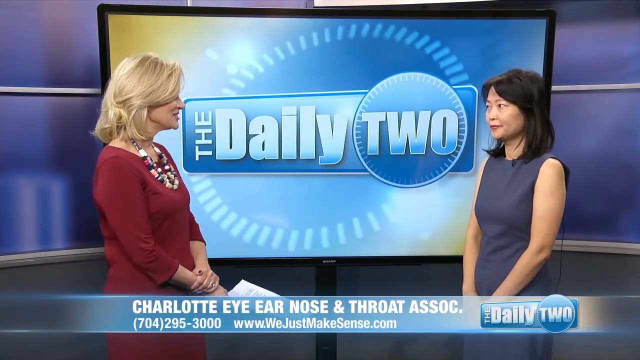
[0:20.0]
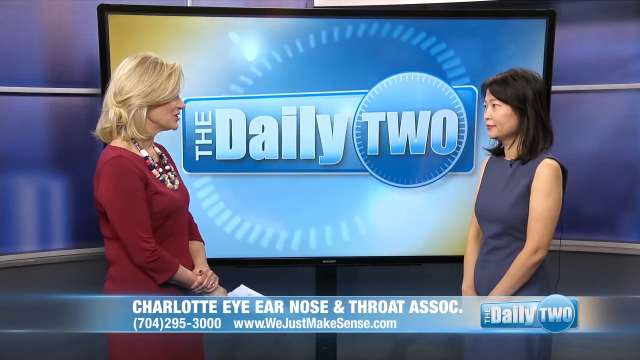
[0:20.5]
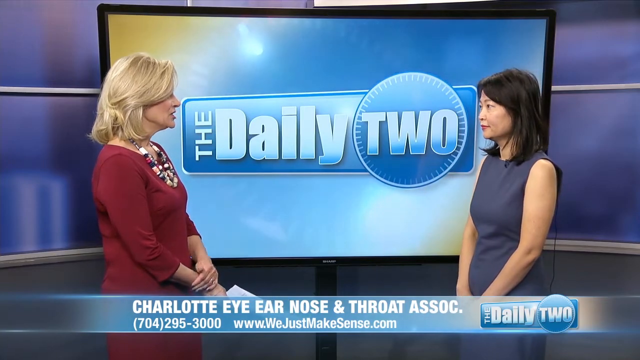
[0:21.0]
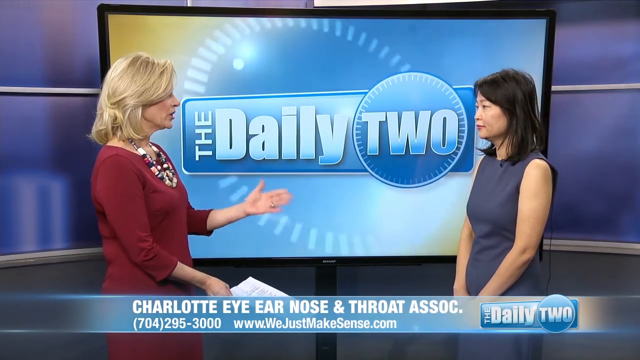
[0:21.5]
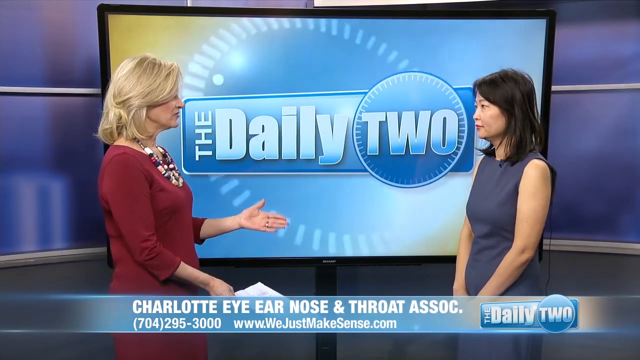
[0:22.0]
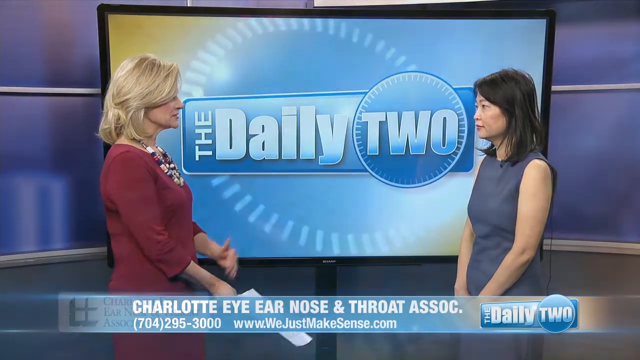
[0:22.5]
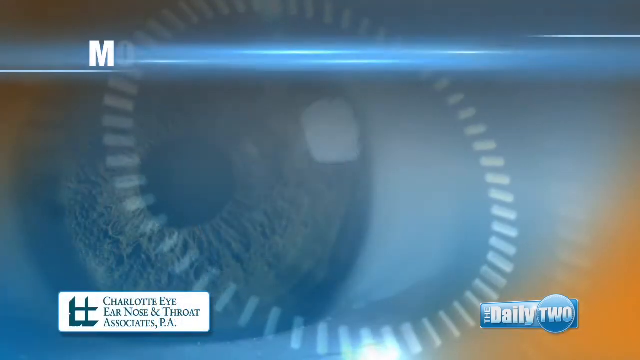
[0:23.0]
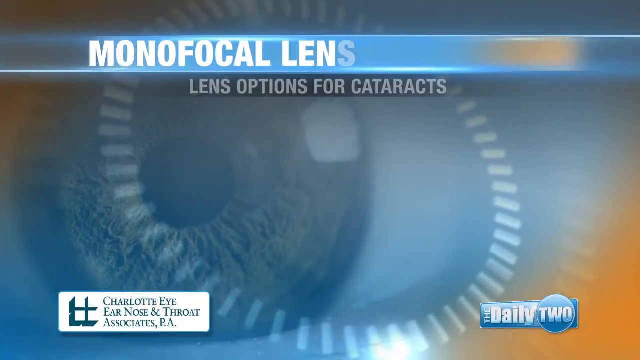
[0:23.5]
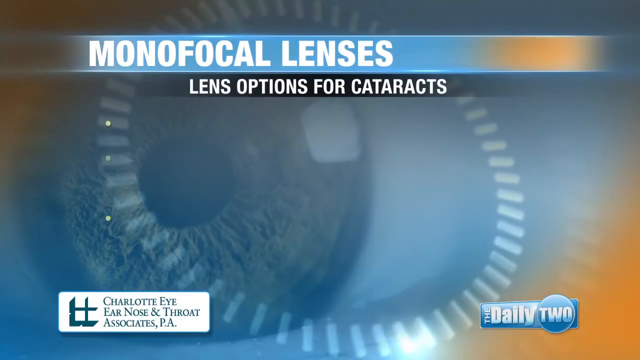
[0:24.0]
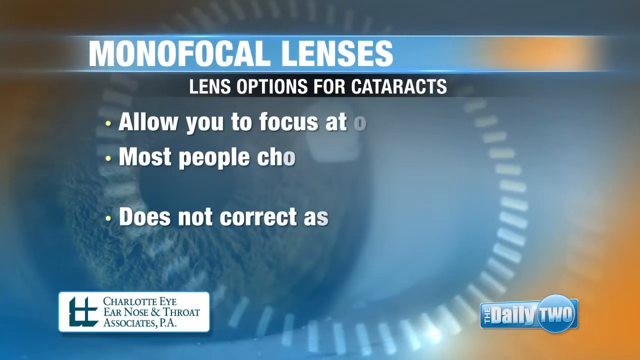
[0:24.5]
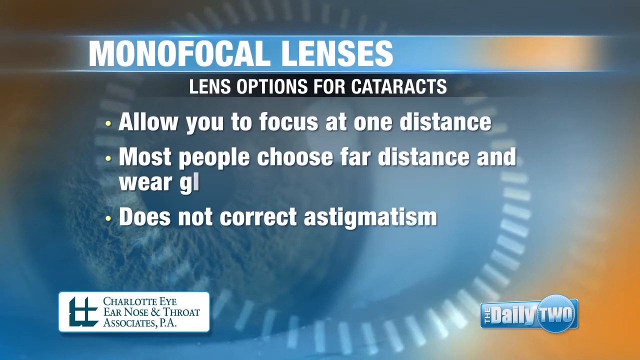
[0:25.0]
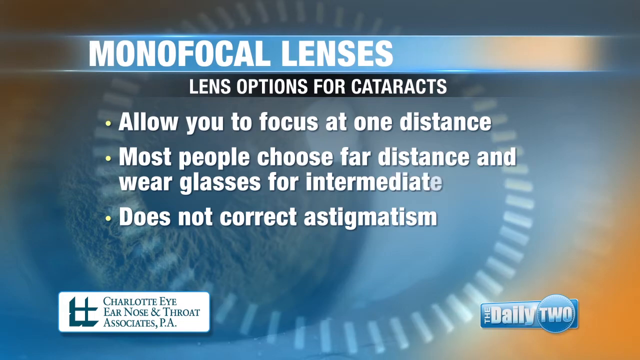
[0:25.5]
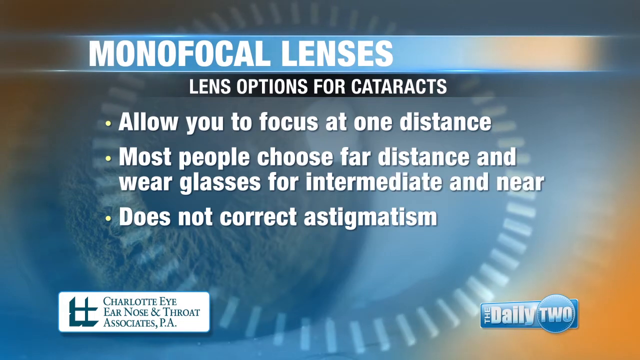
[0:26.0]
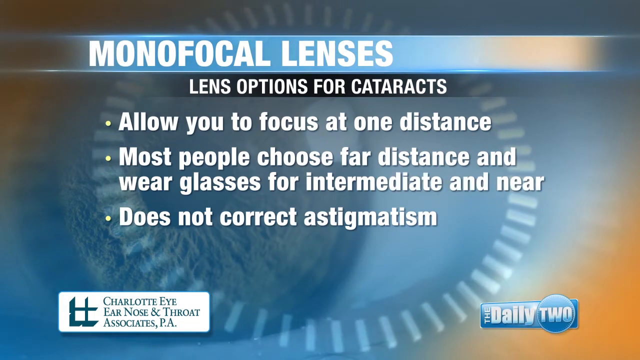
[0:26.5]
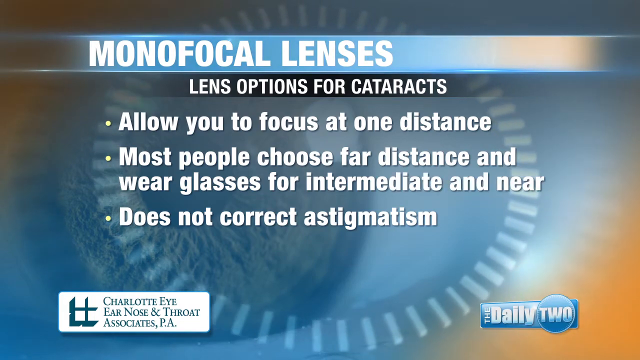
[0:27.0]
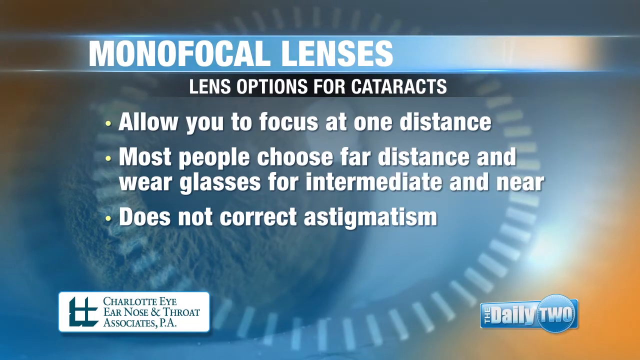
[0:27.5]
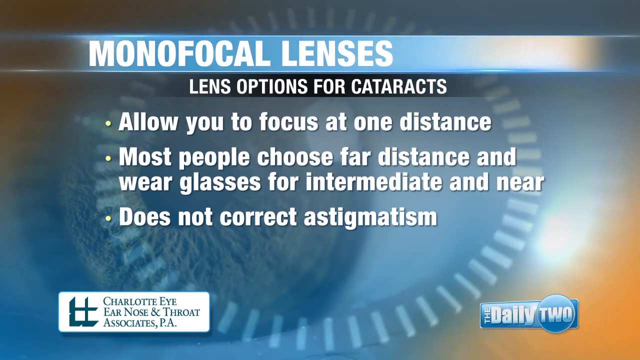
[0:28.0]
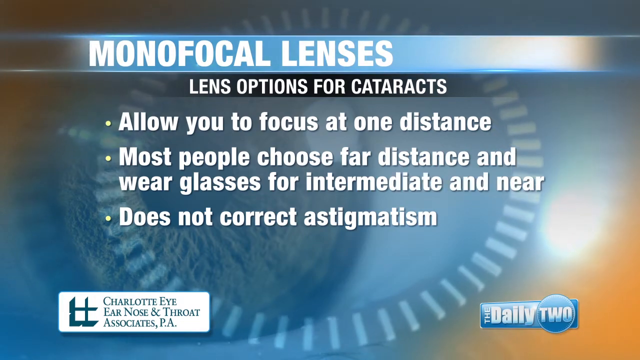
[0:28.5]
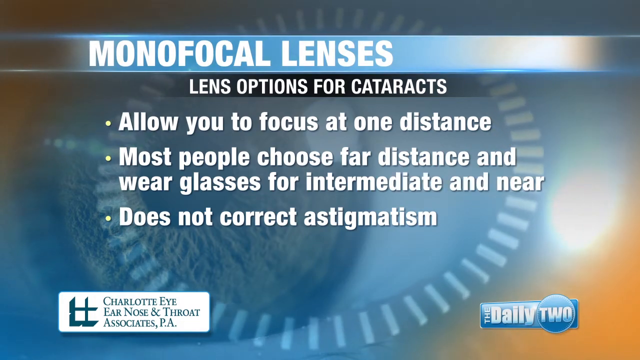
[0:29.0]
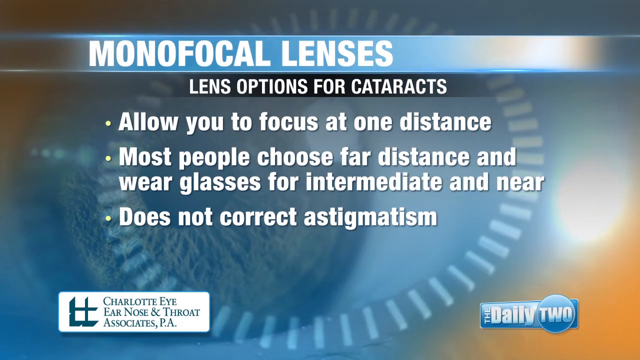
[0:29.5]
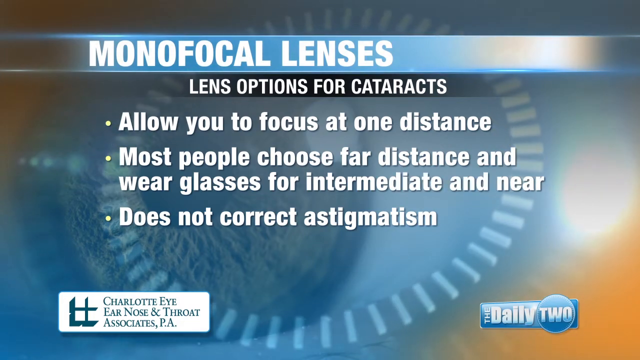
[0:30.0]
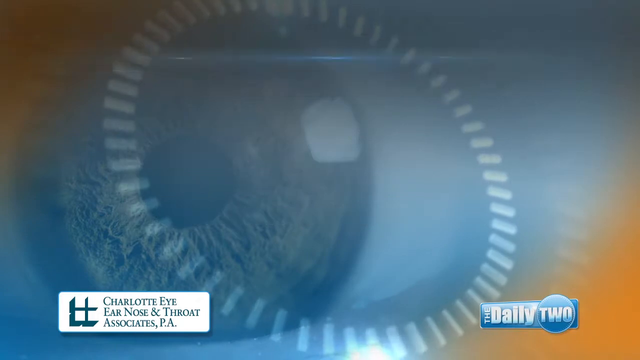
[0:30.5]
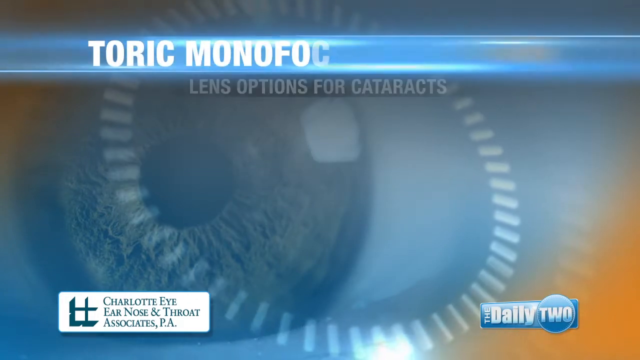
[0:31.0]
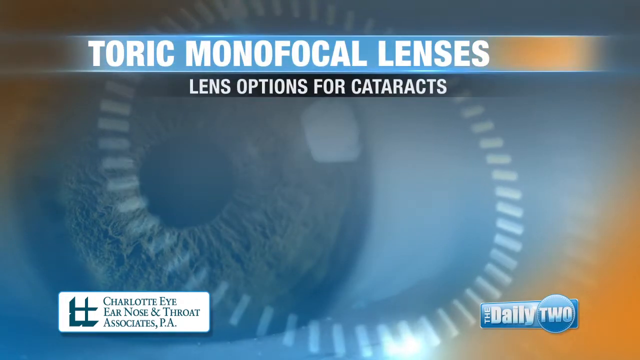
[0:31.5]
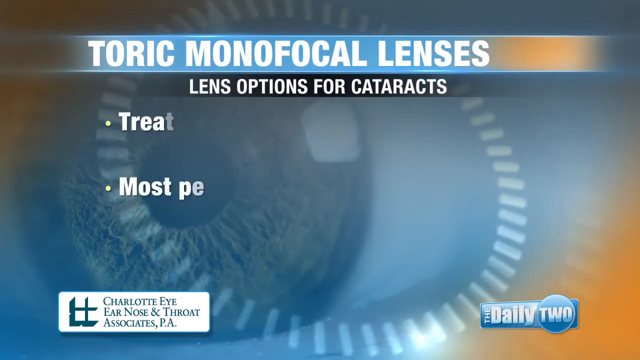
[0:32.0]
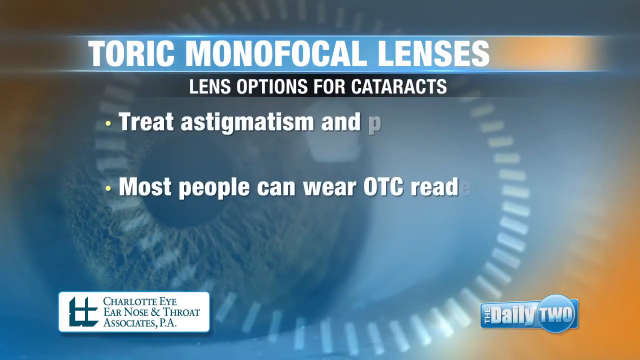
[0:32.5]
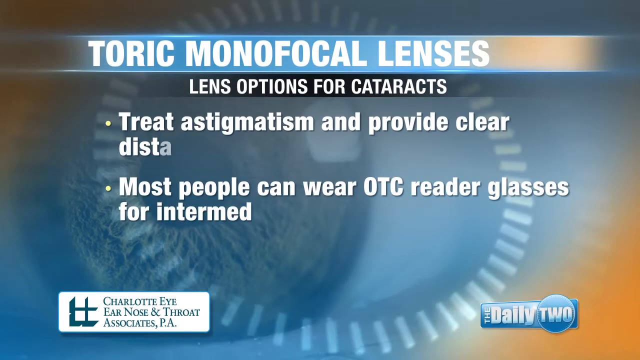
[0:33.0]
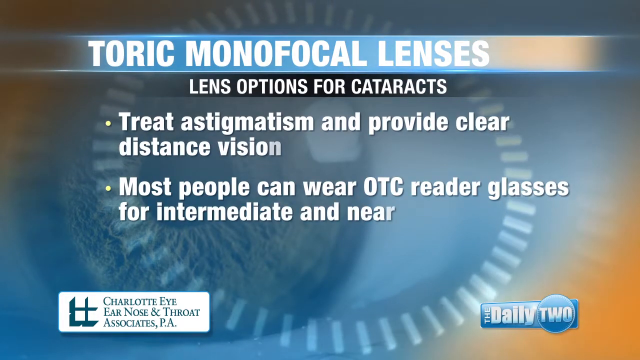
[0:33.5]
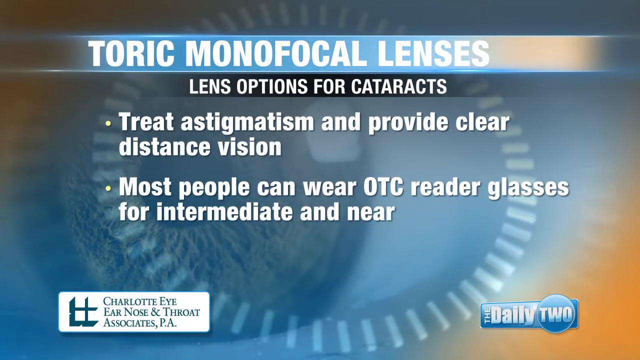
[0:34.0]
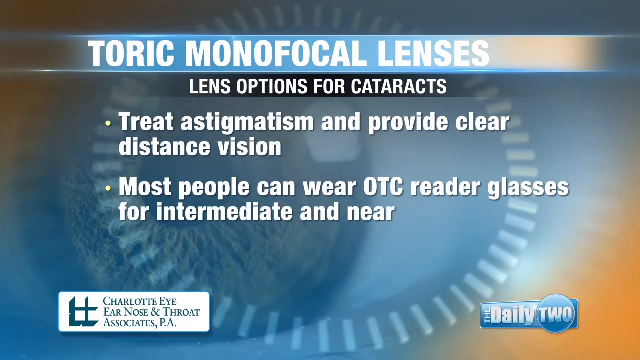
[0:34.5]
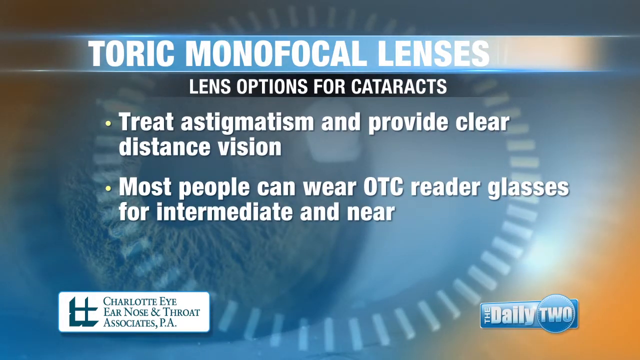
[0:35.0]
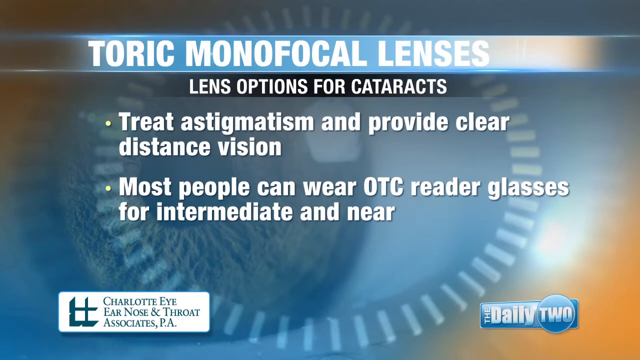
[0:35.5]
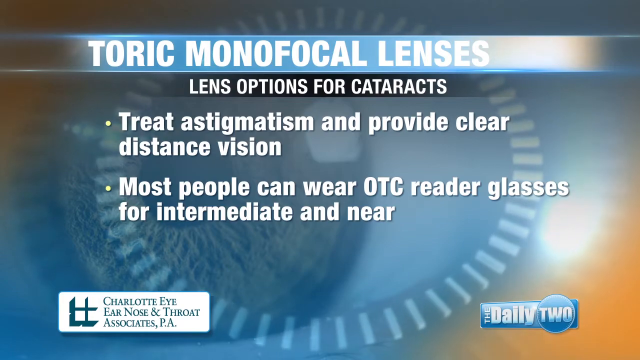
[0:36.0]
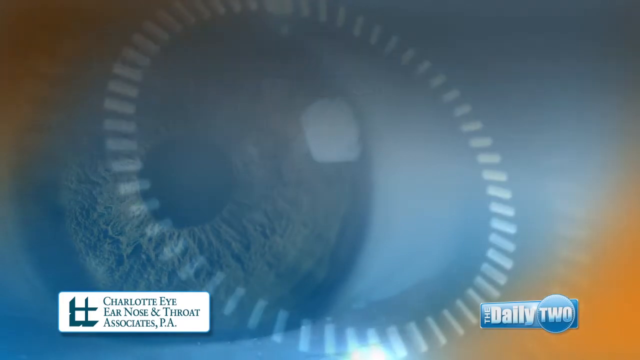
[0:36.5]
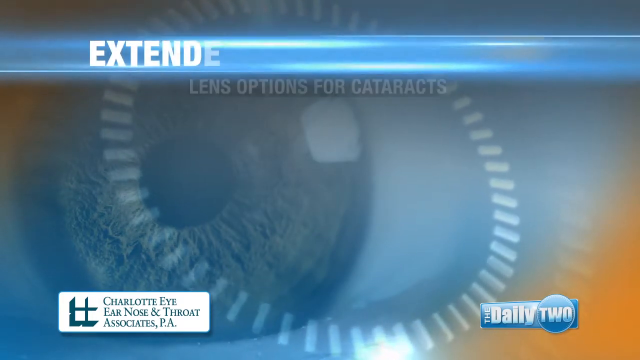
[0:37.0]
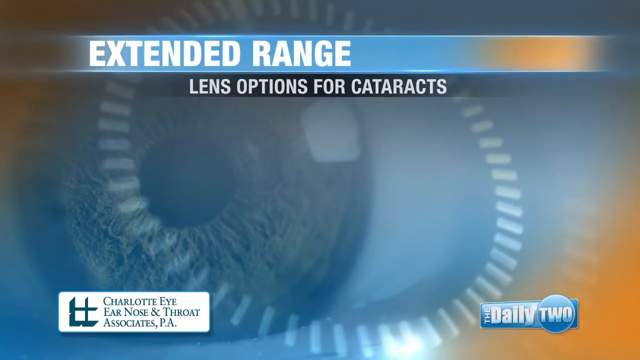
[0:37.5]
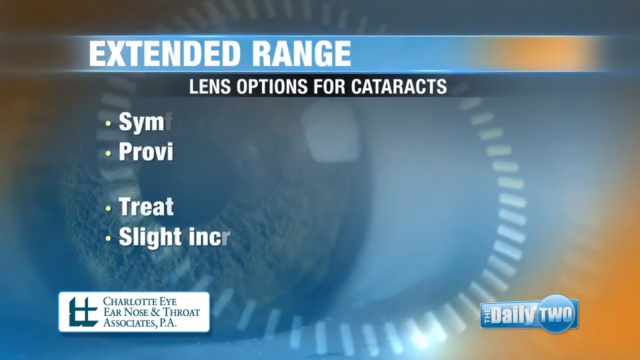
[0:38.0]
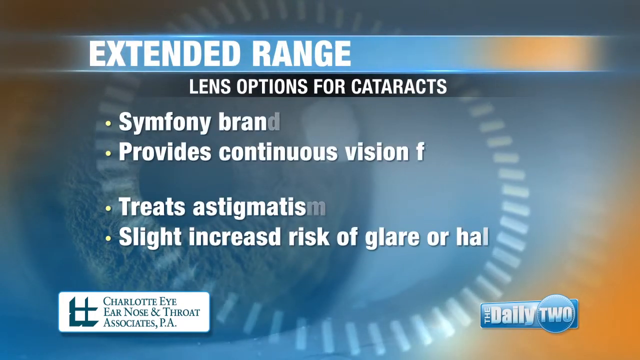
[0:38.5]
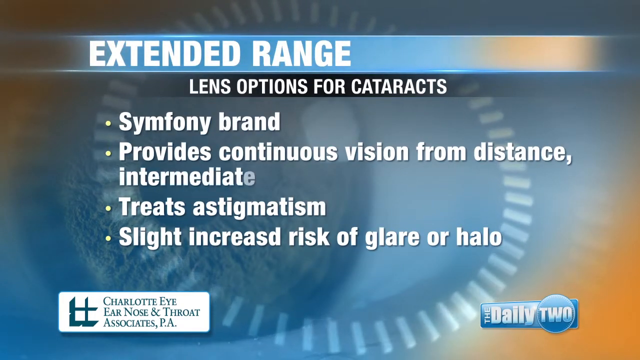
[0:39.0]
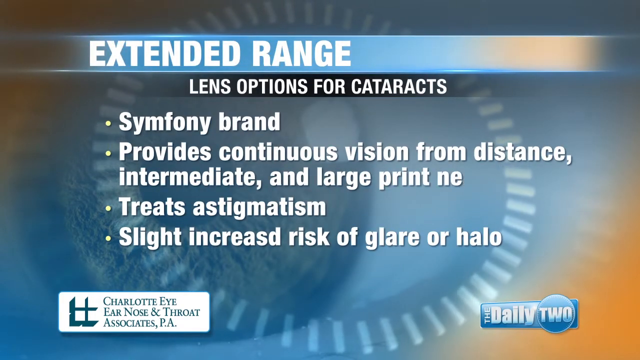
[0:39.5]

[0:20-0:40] The woman is shown wearing a burgundy dress, seen in right profile as she looks toward the left. The fingers of her left hand go across her right wrist and a little above it, and in her right hand she holds paper with words in what looks like black ink. Dark nail polish is visible on the thumb of her left hand. Smiling, she faces right toward another woman, who is Asian with shoulder-length black hair and wears a sleeveless gray dress; this second woman is seen in left profile as she turns toward the first. As the conversation goes on, the woman in the burgundy dress takes her hand off her wrist and moves it around while she talks. Then text reads "monofocal lens" and "lens options for cataracts", with bullet points: "allow you to focus at one distance at a time", "most people choose far distance and wear glasses for intermediate and near", and "does not correct astigmatism".